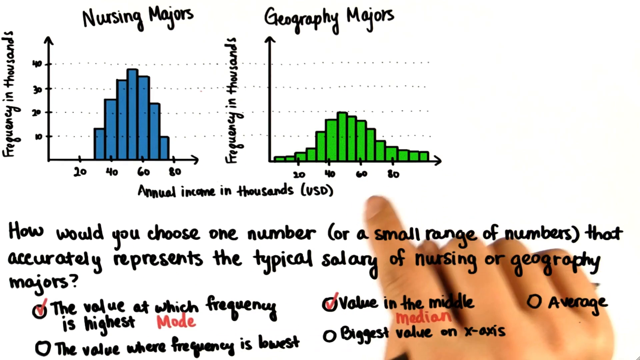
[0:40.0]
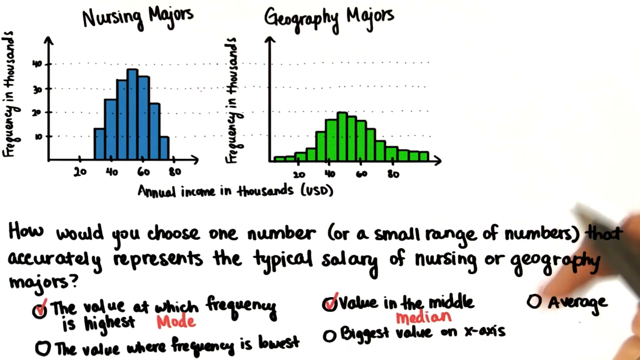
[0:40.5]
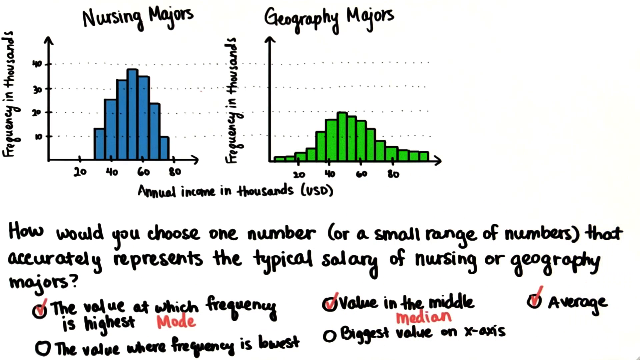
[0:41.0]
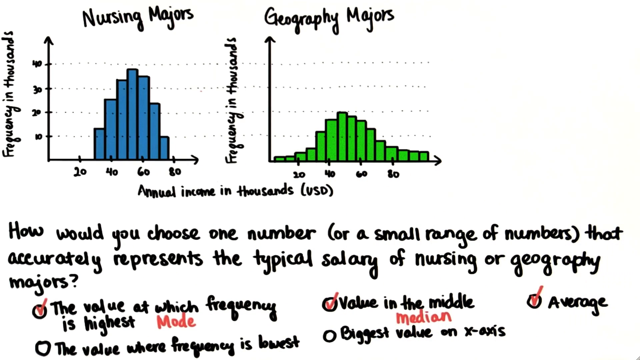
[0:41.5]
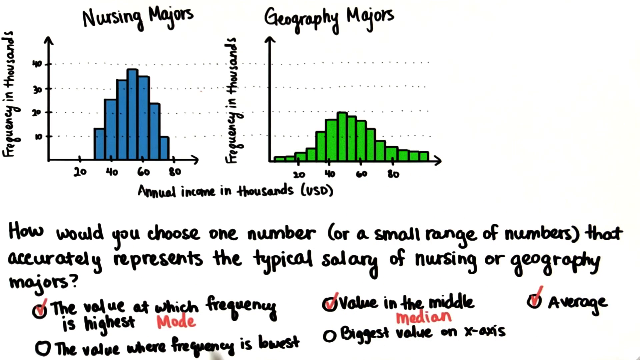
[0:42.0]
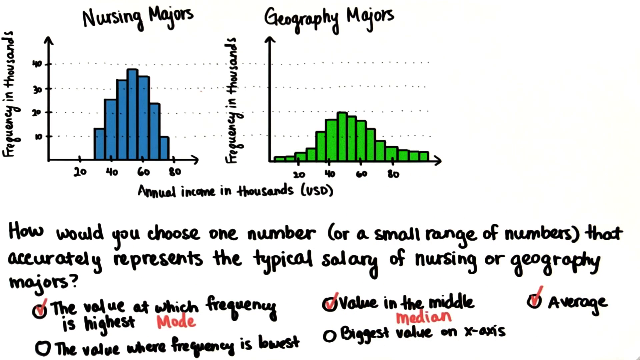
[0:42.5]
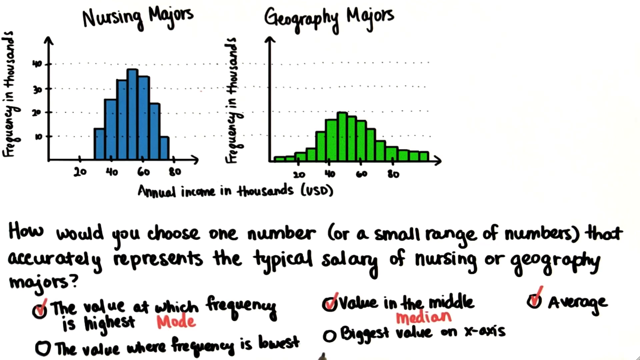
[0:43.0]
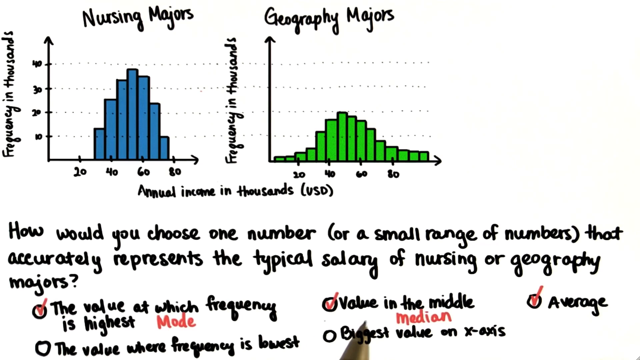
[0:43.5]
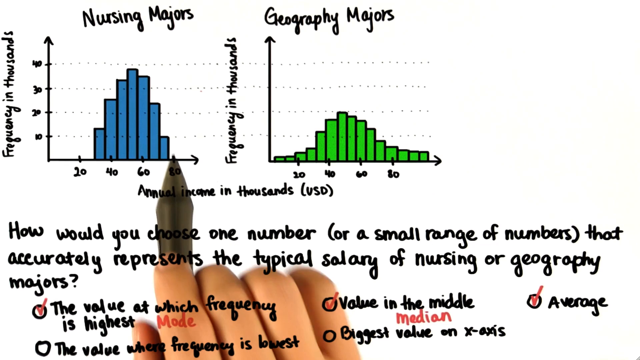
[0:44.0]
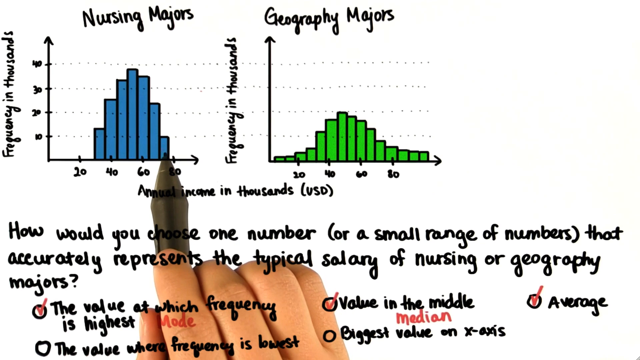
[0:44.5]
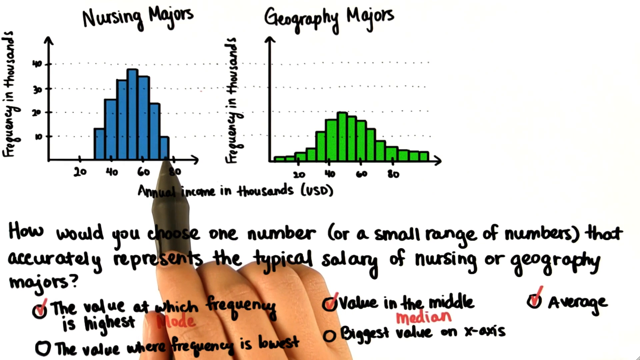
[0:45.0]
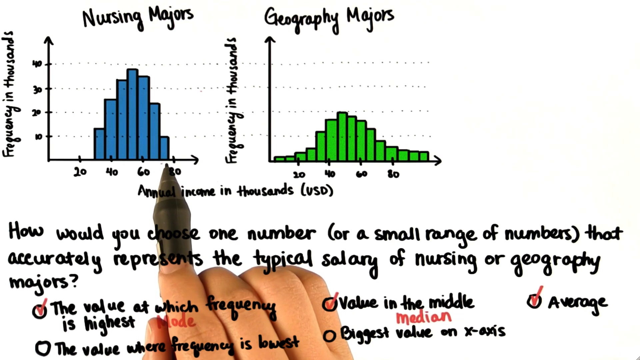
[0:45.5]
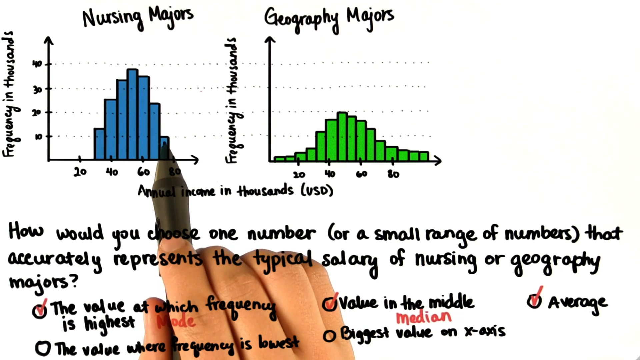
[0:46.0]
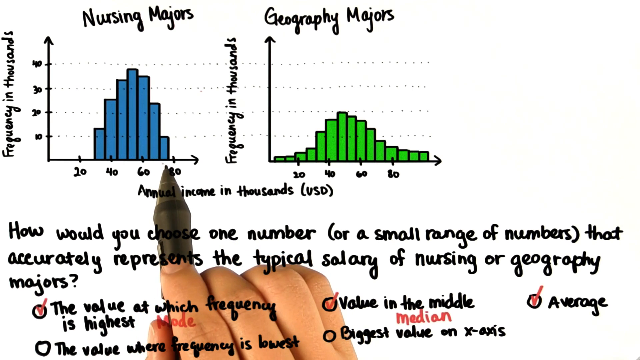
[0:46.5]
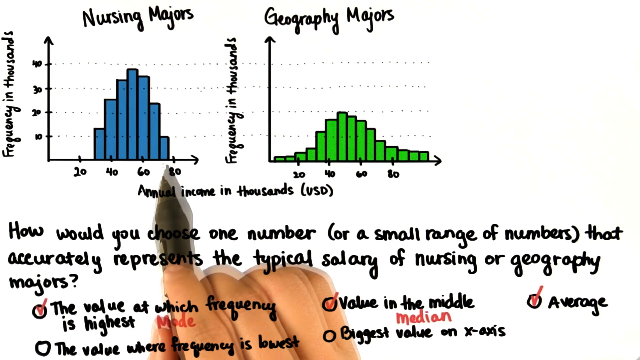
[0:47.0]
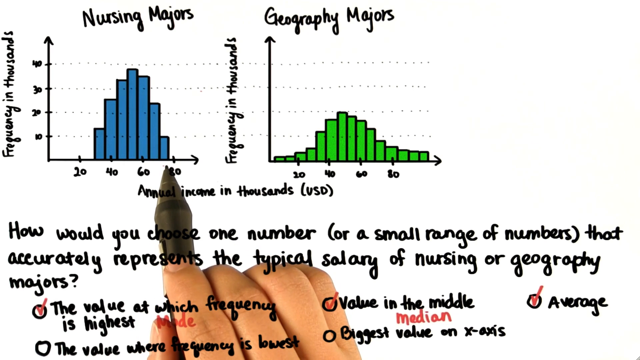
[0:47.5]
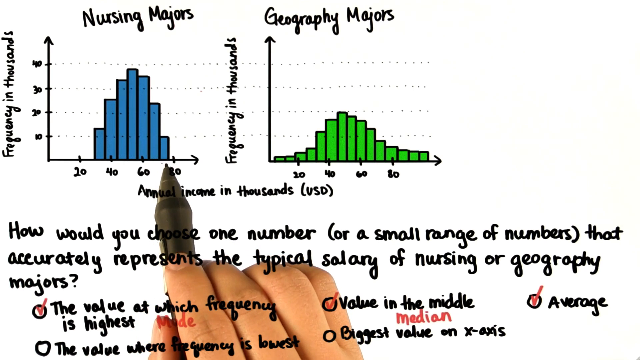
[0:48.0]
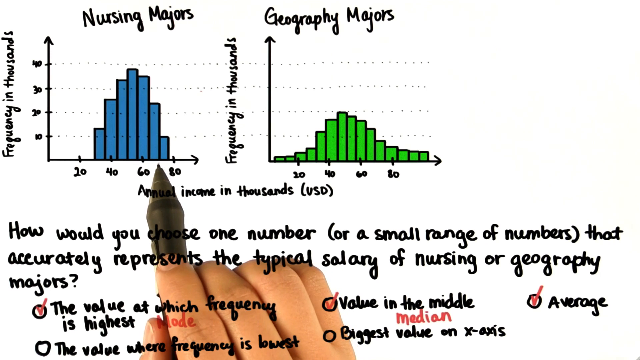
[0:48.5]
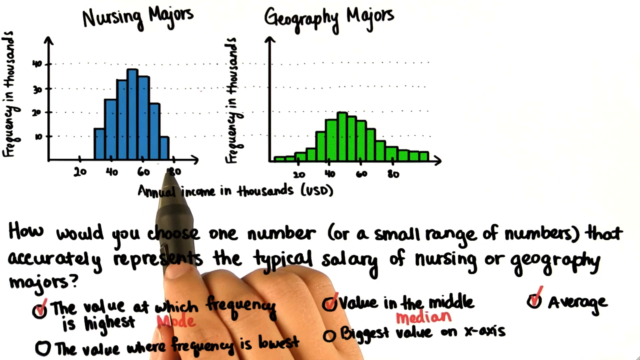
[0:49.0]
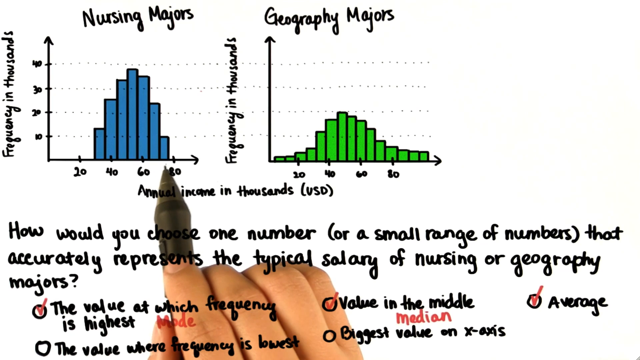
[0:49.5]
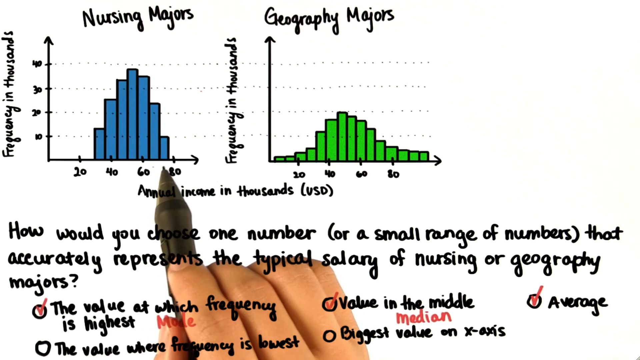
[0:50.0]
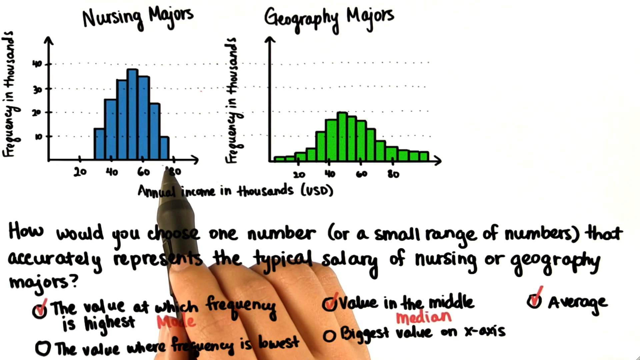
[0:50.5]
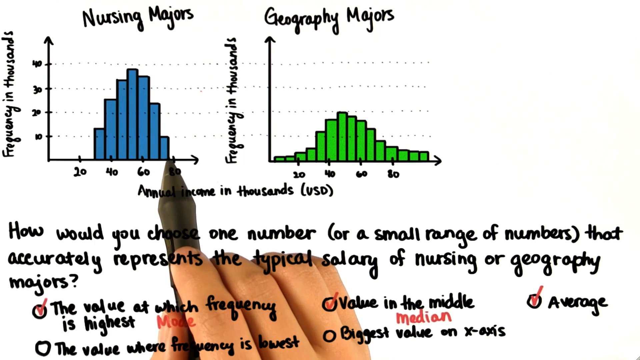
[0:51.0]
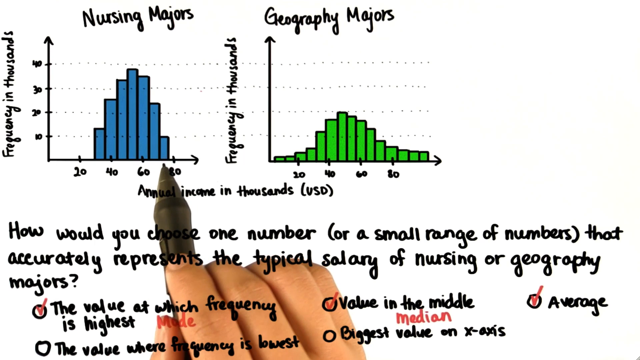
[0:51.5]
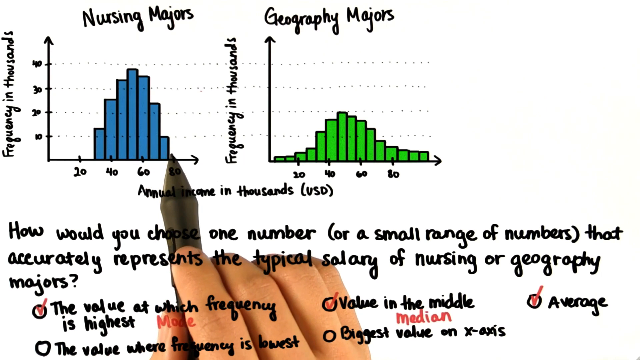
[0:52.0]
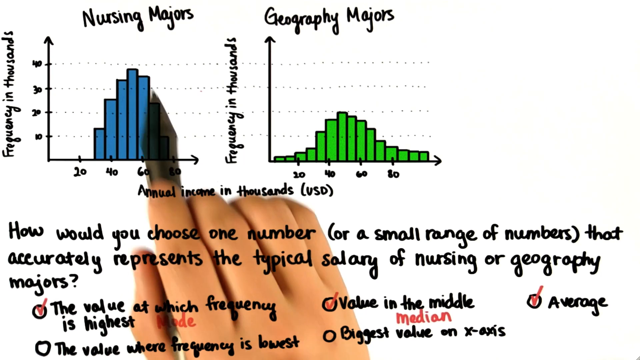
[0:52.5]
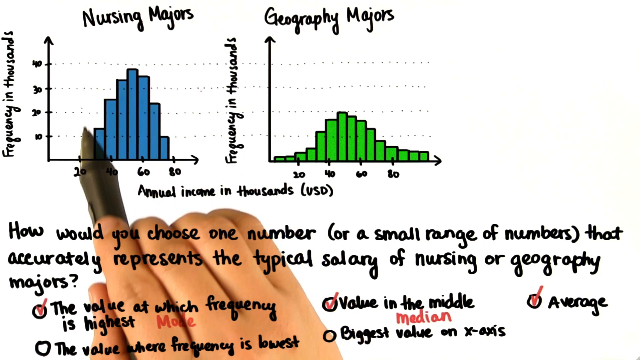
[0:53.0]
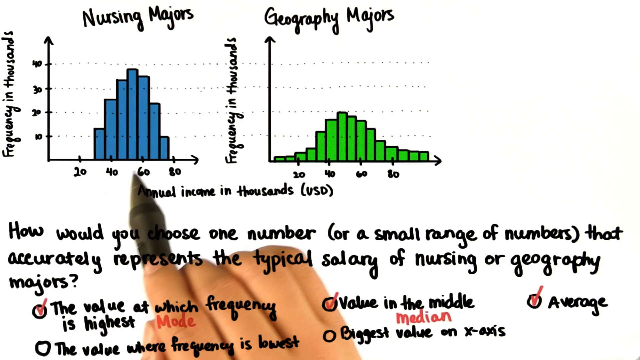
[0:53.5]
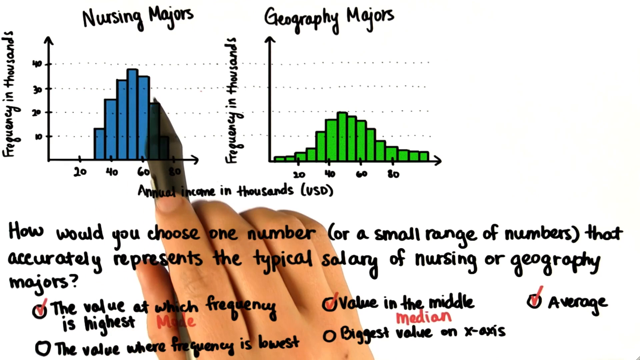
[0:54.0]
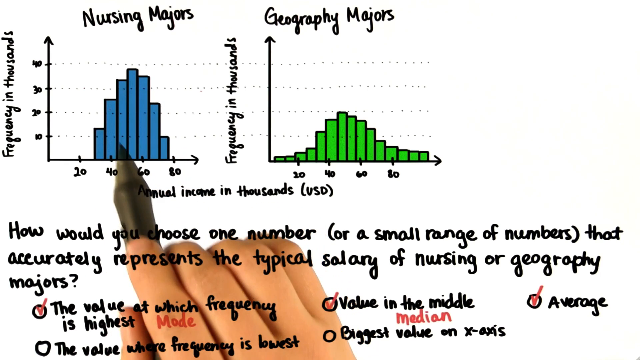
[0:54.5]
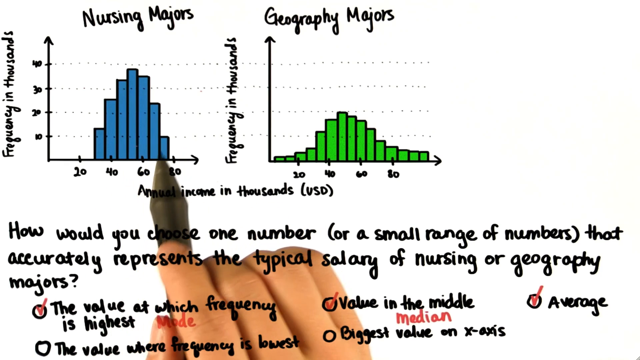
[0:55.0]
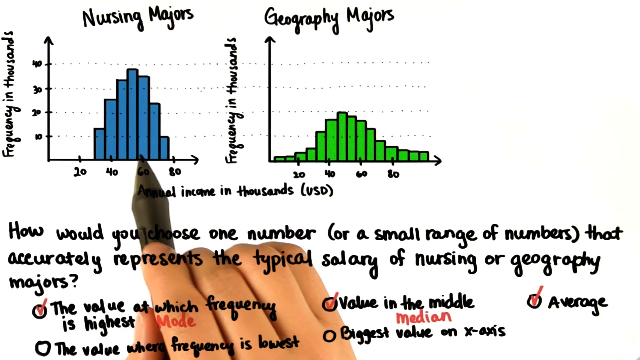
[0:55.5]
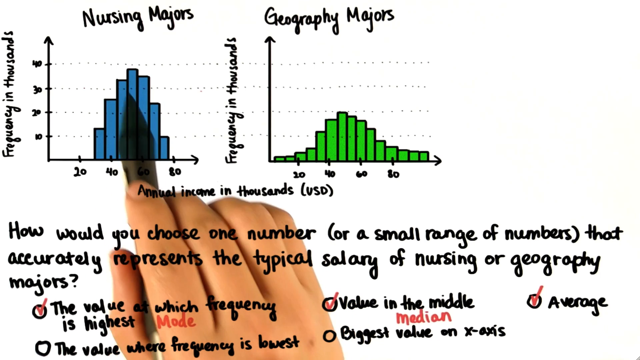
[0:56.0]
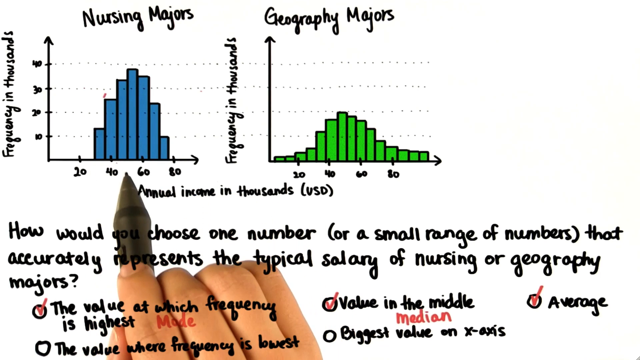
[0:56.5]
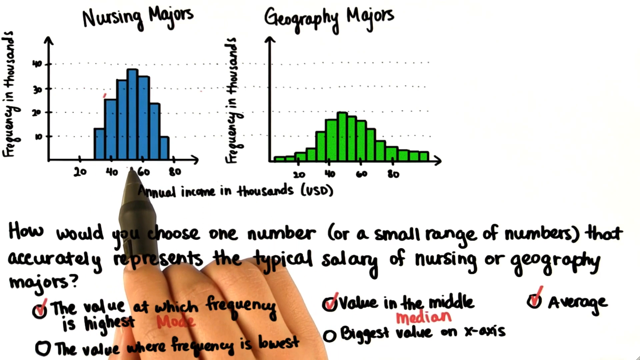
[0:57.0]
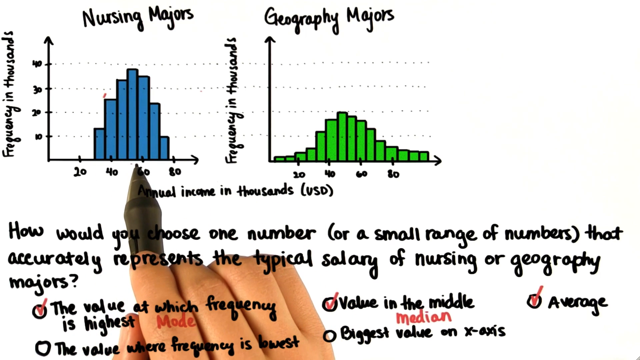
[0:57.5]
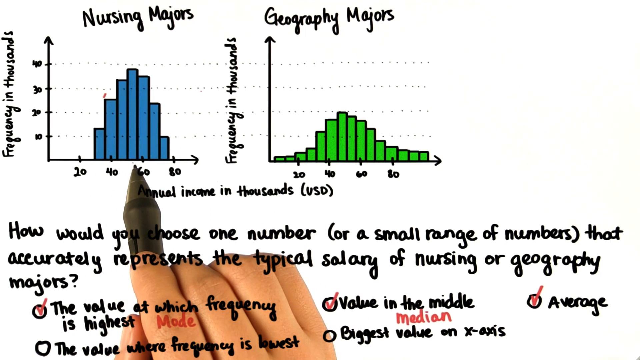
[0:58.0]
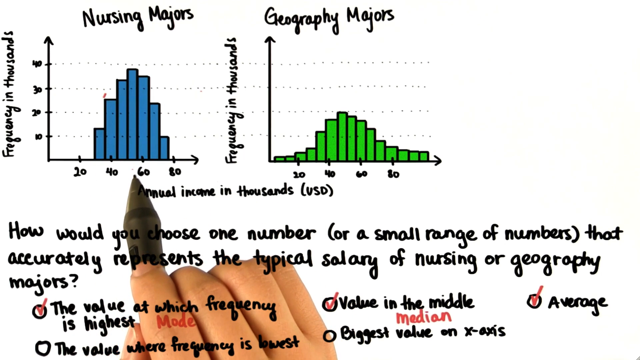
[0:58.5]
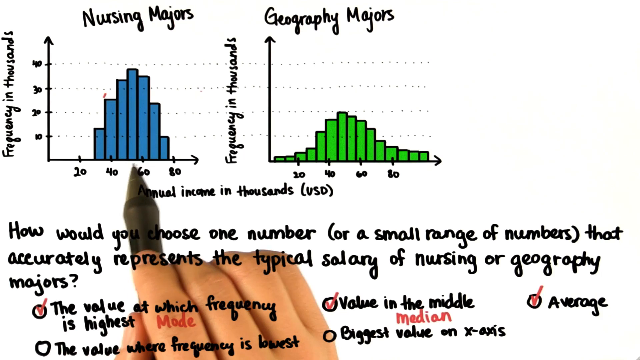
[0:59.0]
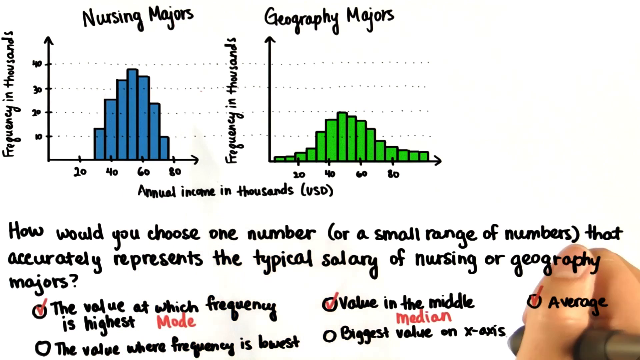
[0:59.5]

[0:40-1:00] Two graphs are shown, one of nursing majors and the other of geography majors; all the words on the screen are in black. The nursing bars are blue and the geography bars are green, and the side reads "frequency in thousands". At the bottom is a question, with answers to select from below it. A hand holding a black pen writes in red, ticking the answers at the bottom, and the person seems to be explaining the graphs.